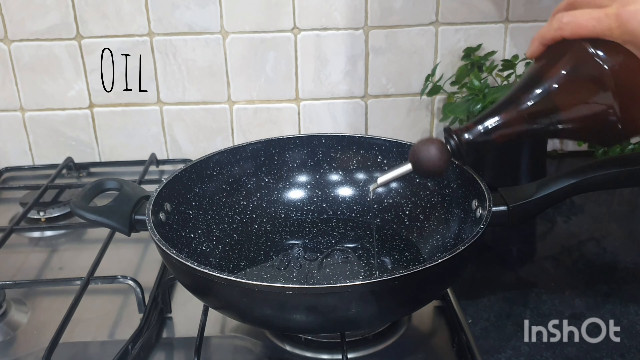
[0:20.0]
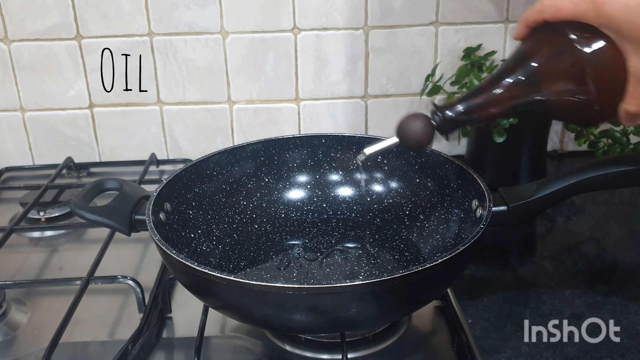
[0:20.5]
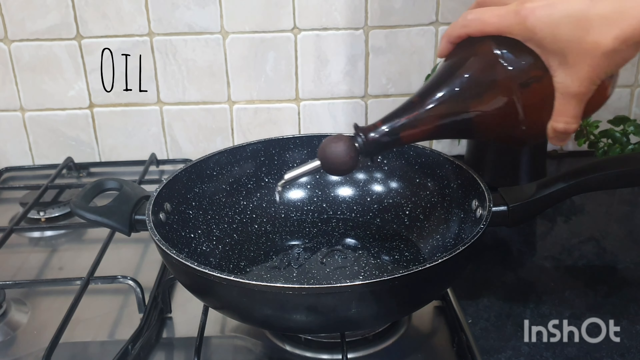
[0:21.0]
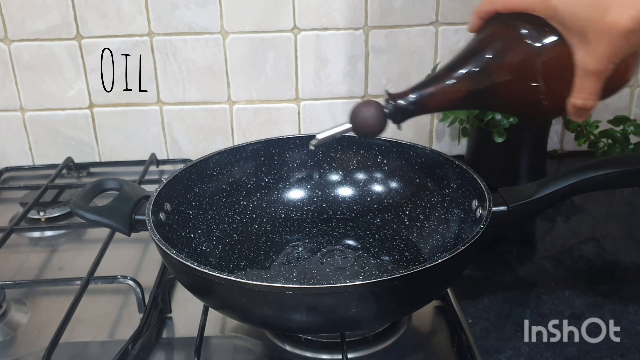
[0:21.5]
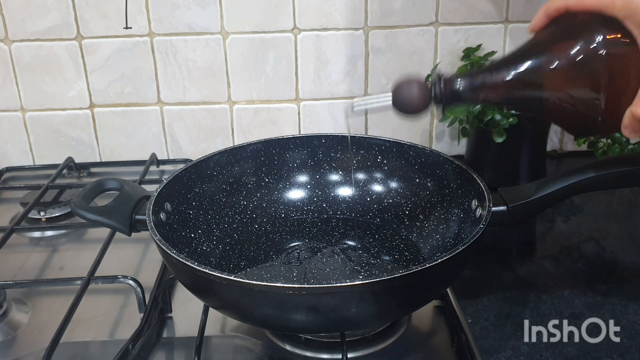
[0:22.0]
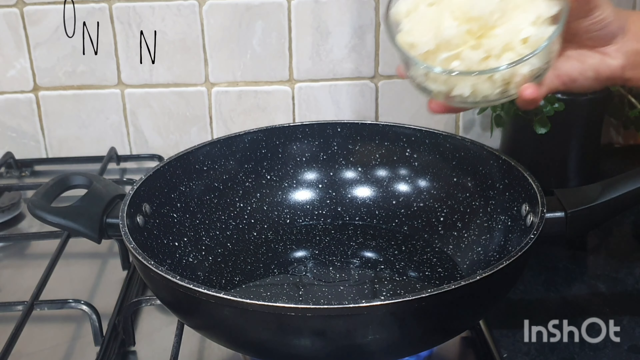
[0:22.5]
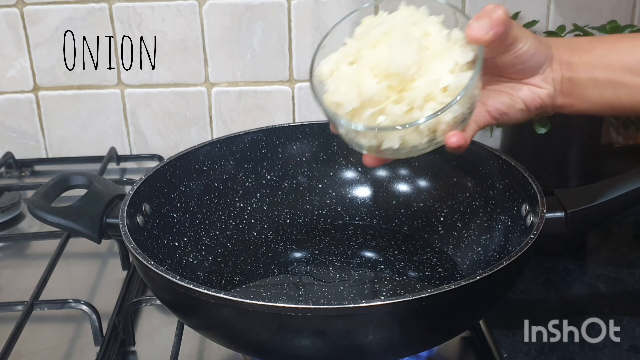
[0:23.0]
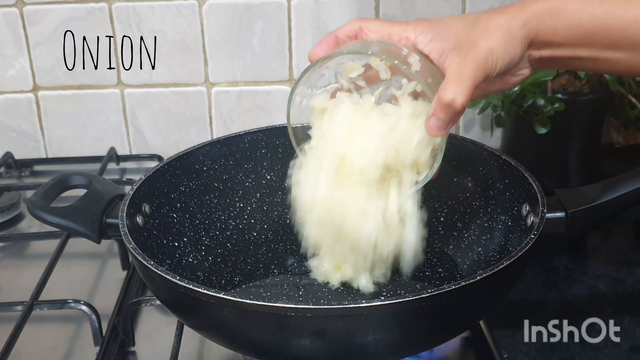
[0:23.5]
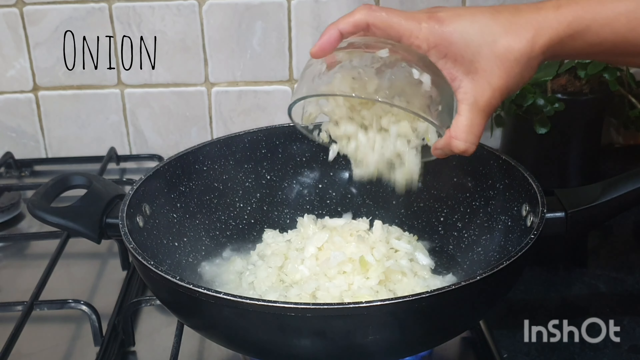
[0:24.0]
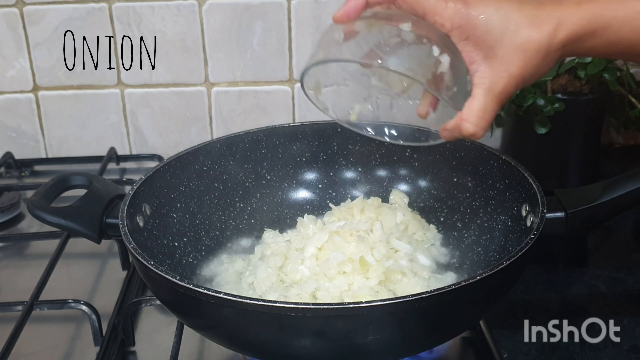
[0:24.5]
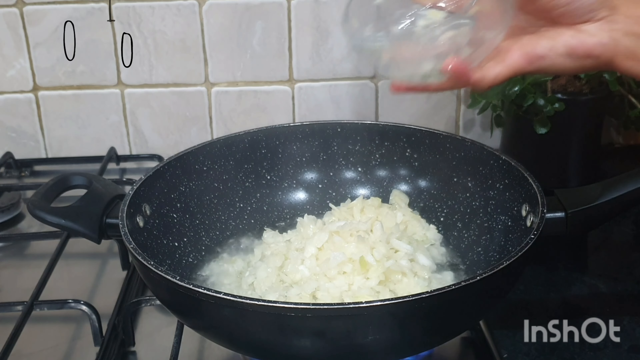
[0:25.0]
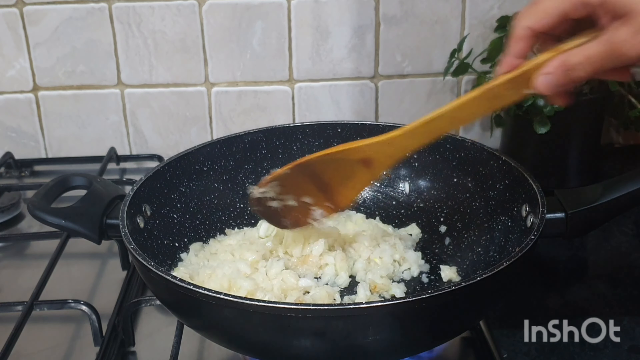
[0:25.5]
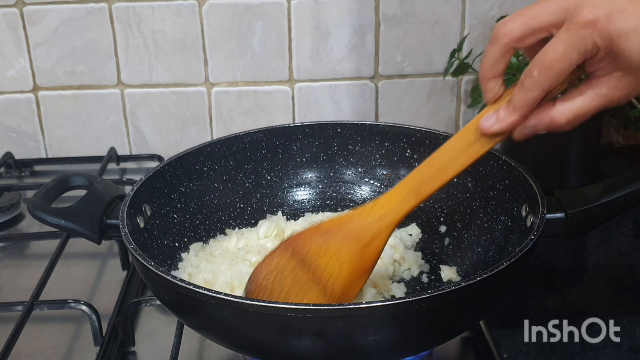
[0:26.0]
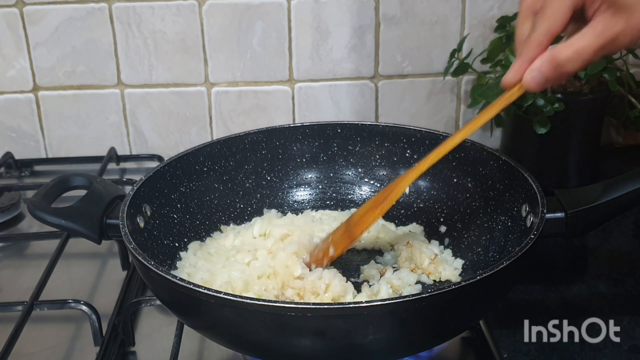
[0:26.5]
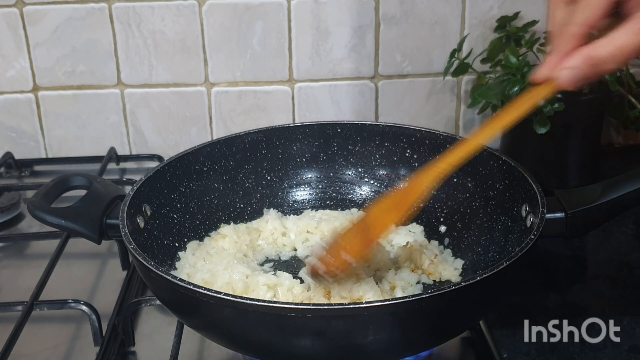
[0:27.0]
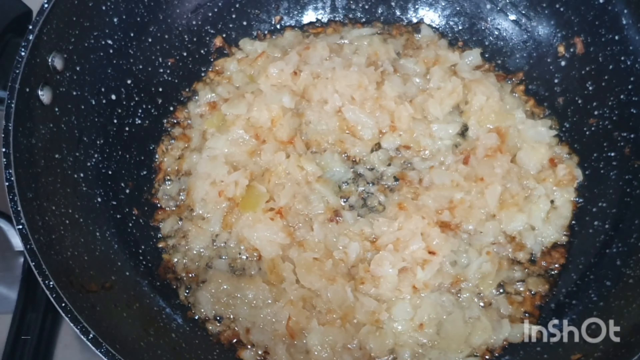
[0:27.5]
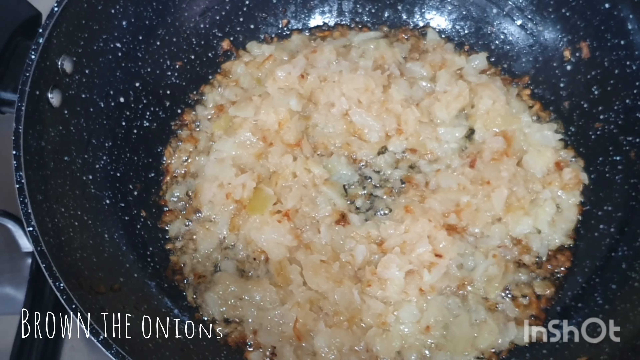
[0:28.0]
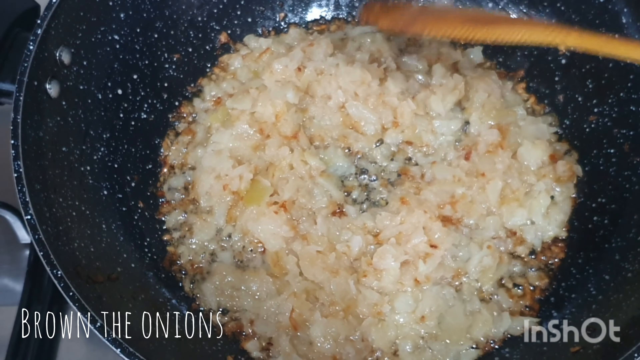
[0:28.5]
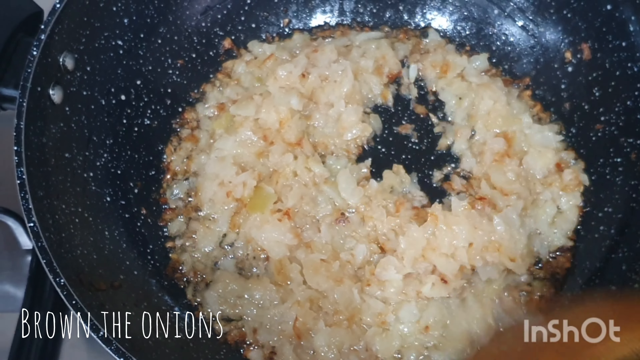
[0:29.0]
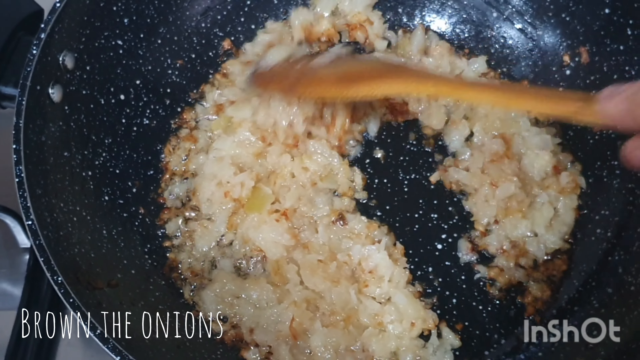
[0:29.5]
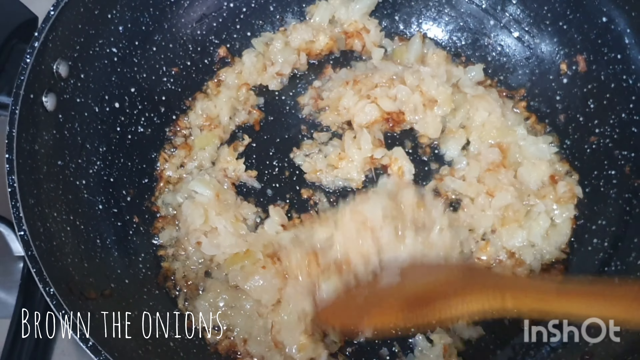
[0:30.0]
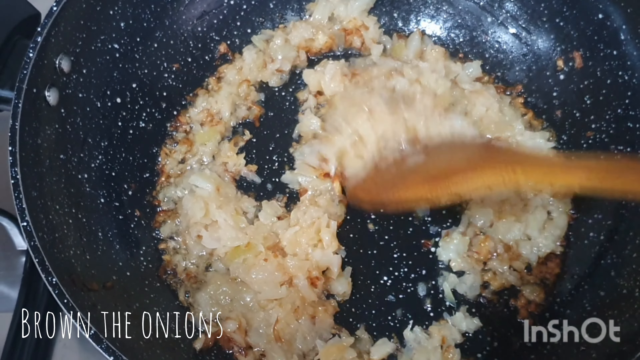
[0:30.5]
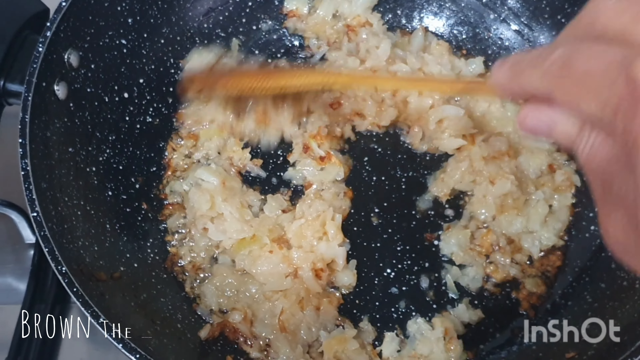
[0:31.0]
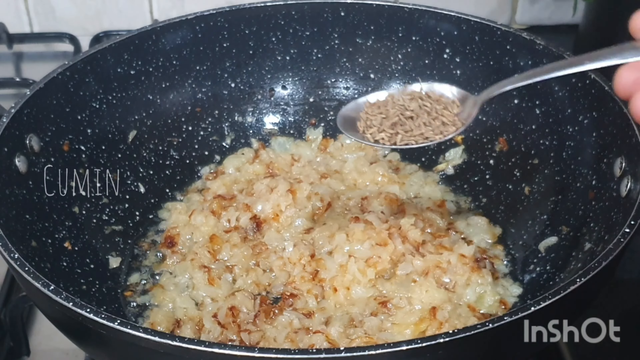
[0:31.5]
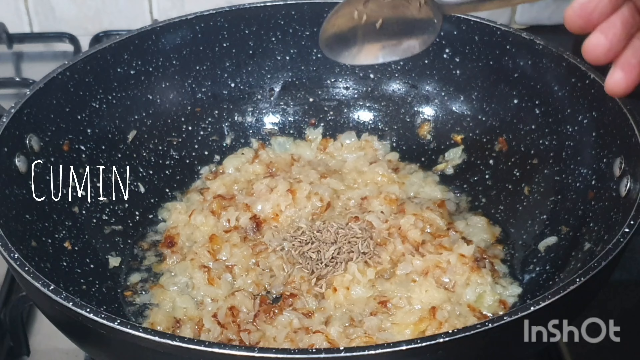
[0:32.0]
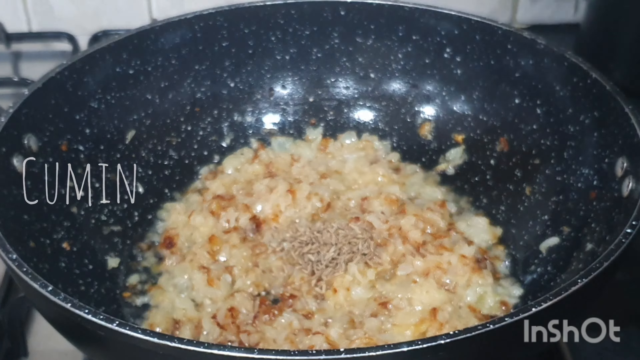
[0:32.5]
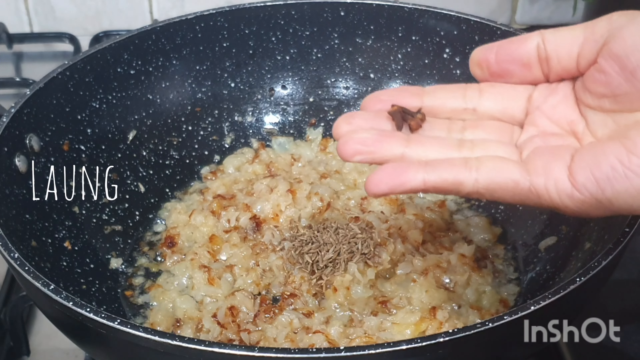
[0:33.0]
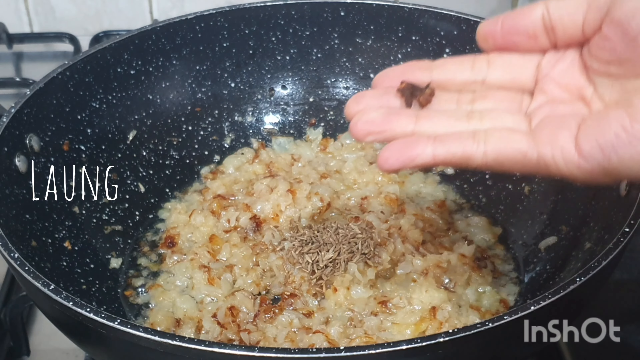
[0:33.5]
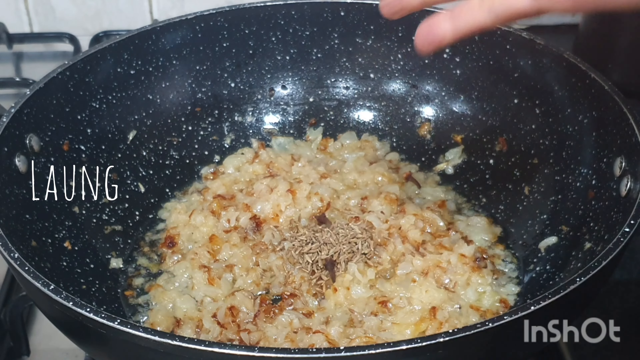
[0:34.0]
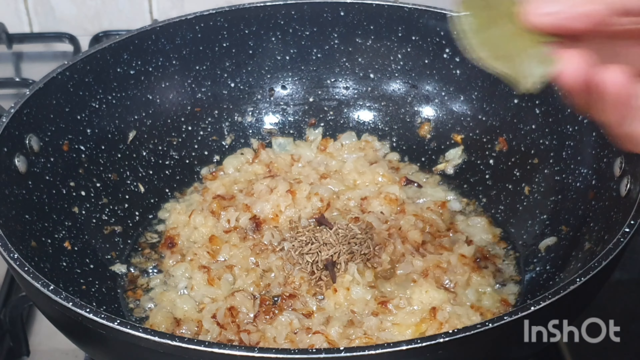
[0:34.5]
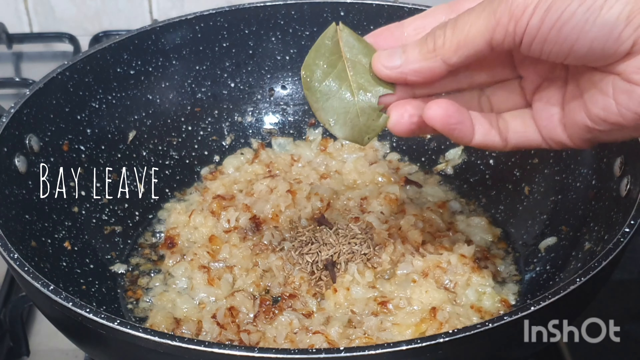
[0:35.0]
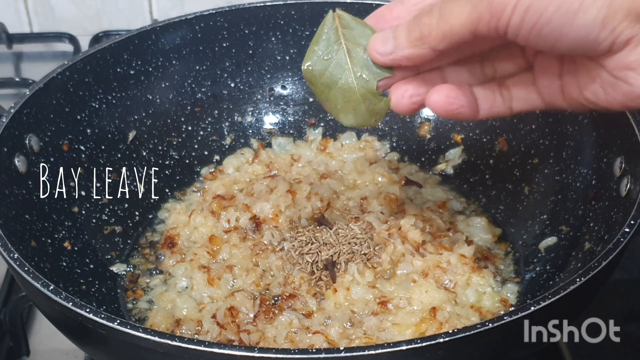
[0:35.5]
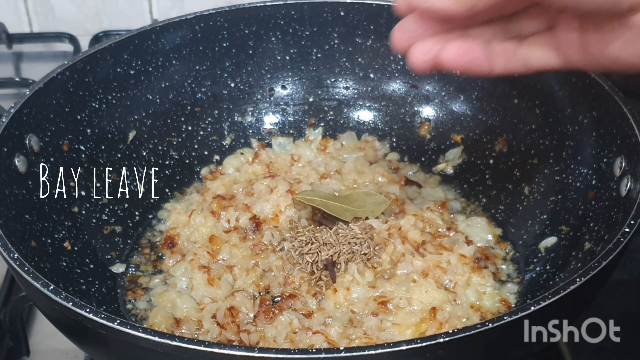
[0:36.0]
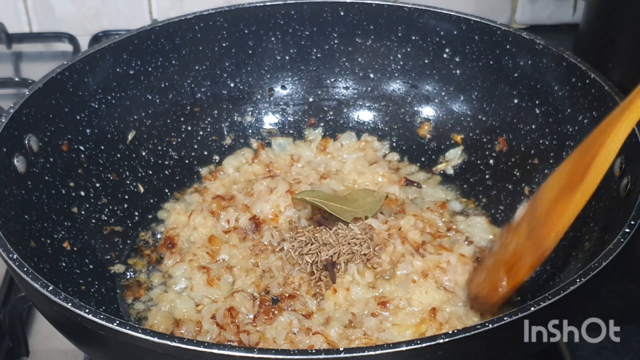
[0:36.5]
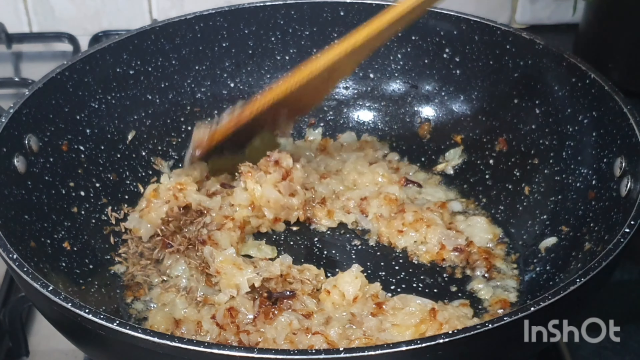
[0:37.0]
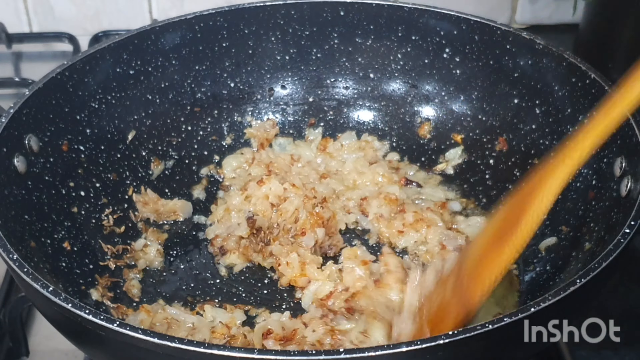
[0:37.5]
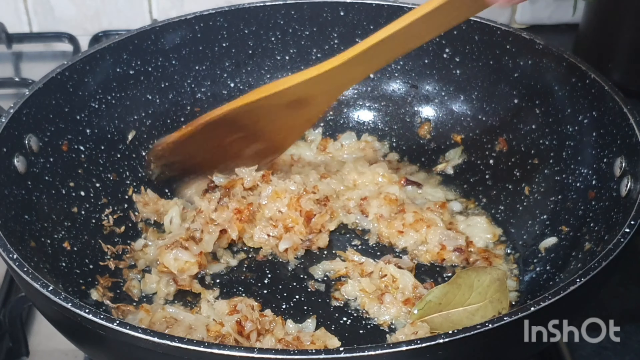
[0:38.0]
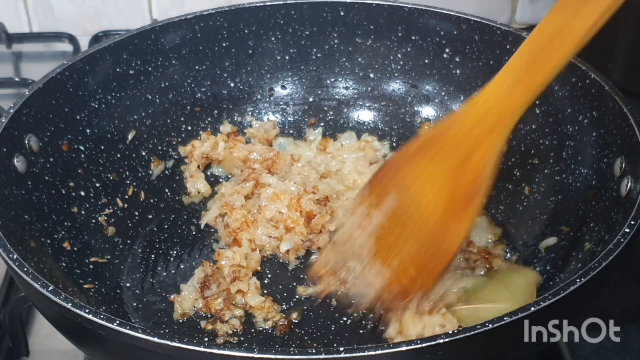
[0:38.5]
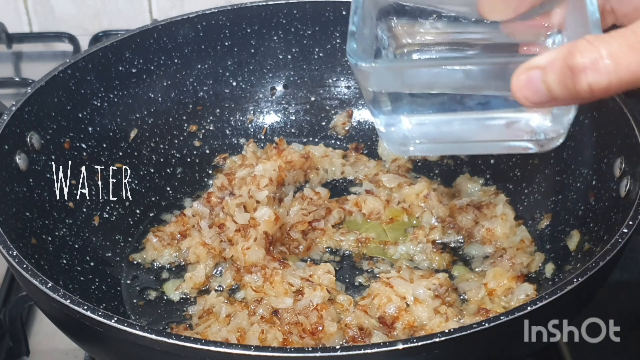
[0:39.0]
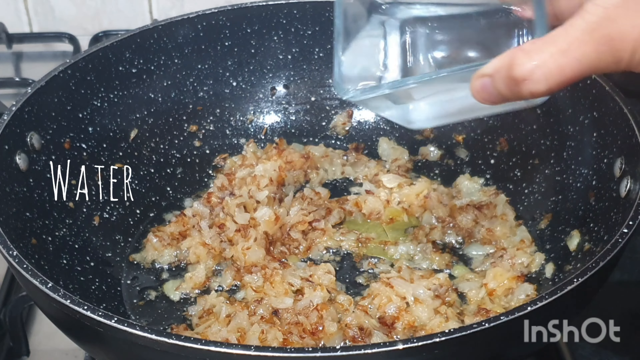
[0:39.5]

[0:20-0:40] With the oil already in the pan, chopped onions are added and cooked very slowly until they are translucent. Cumin, another ingredient, a bay leaf and some water are added. In the background there is a plant that looks like it could be some sort of fresh herbs. The kitchen is clean, and the wall behind the gas hob is covered with white tiles. The pan looks brand new, very shiny.